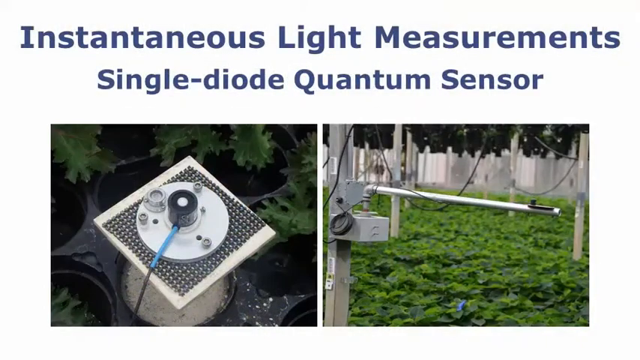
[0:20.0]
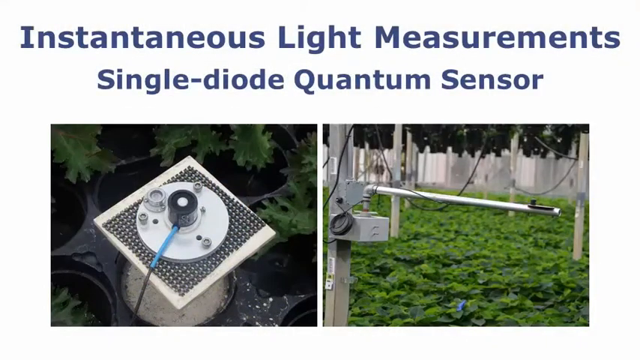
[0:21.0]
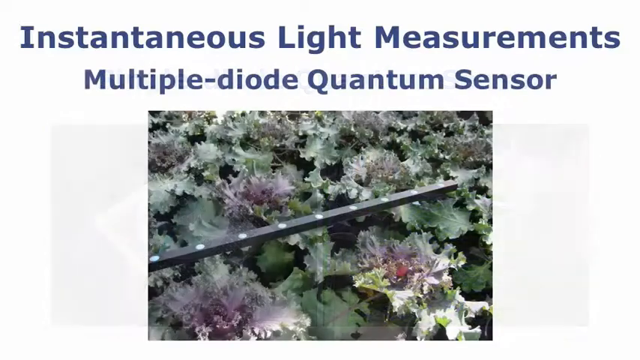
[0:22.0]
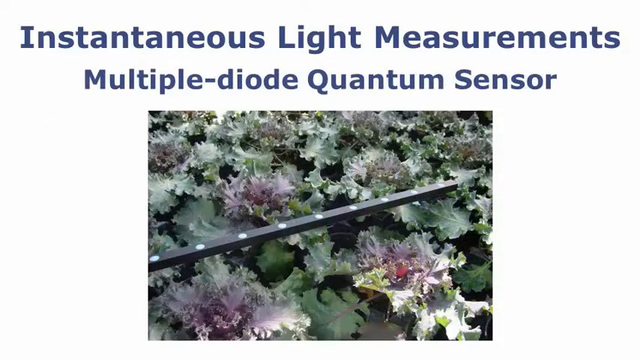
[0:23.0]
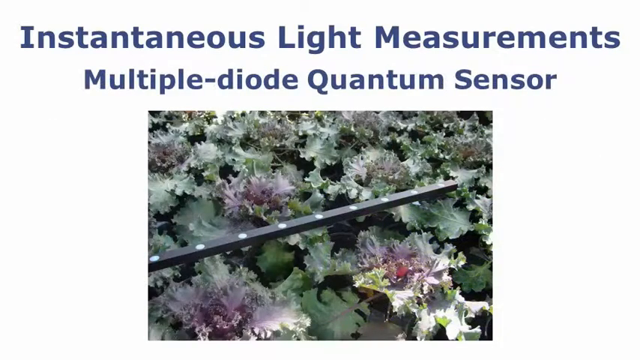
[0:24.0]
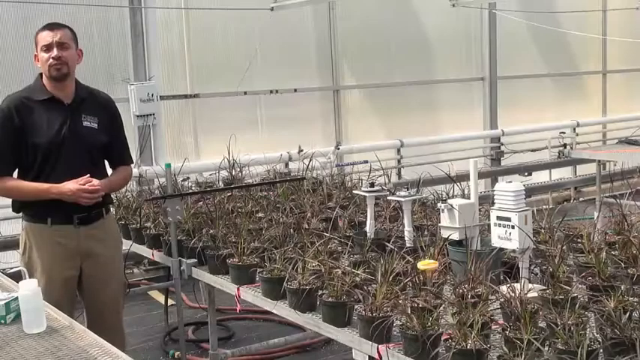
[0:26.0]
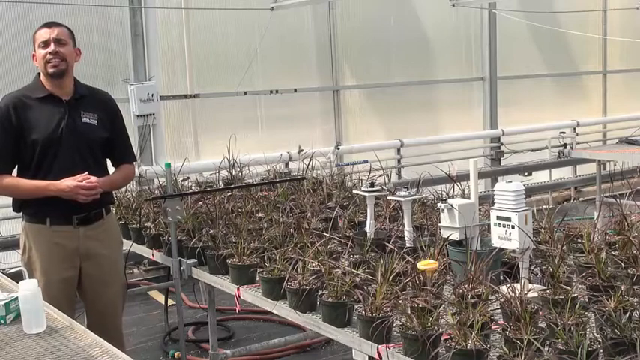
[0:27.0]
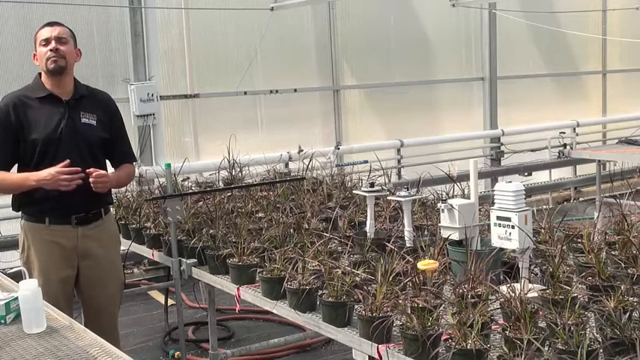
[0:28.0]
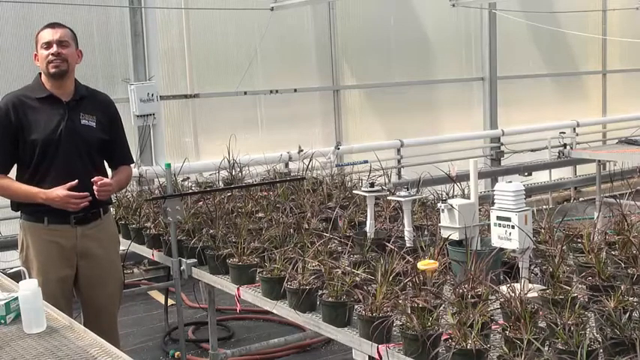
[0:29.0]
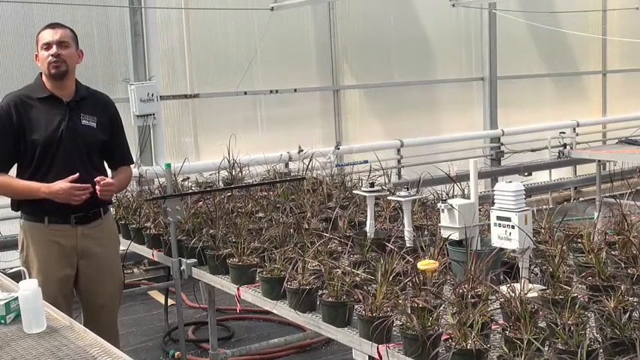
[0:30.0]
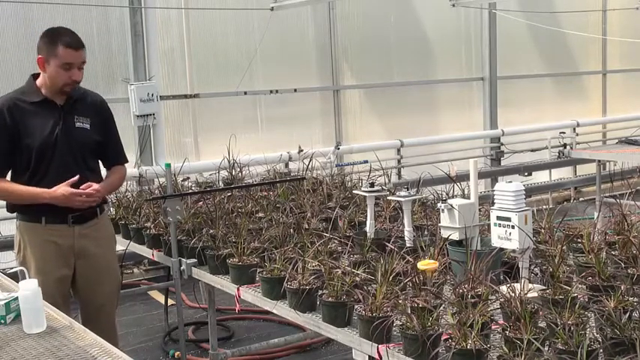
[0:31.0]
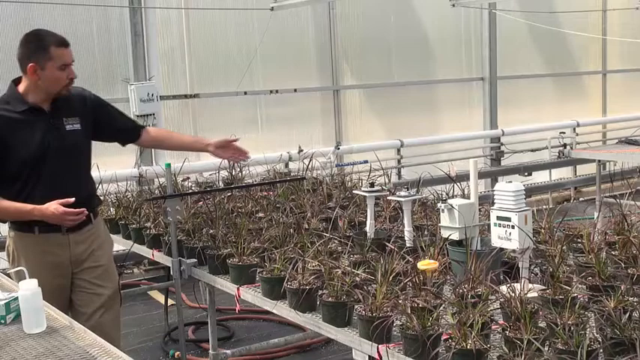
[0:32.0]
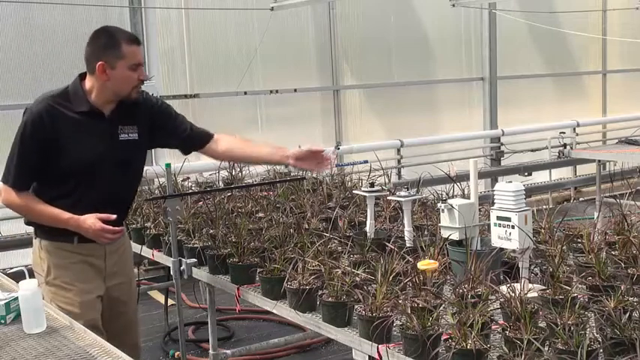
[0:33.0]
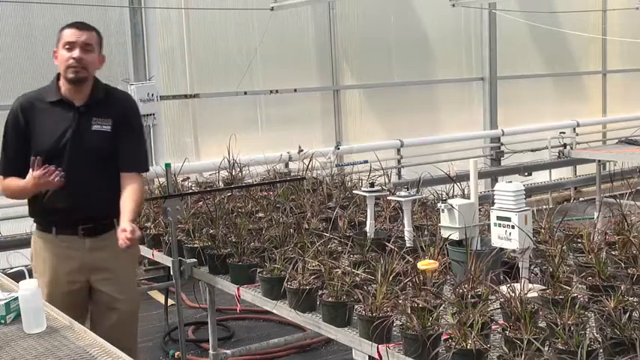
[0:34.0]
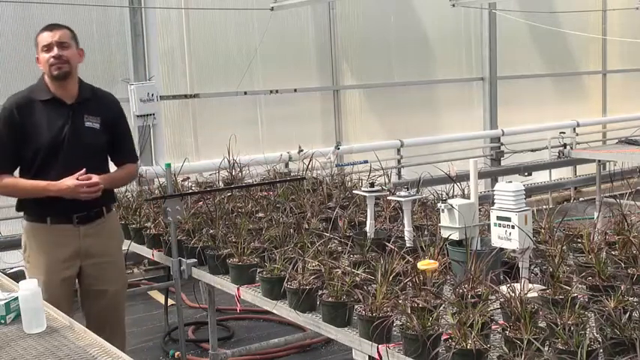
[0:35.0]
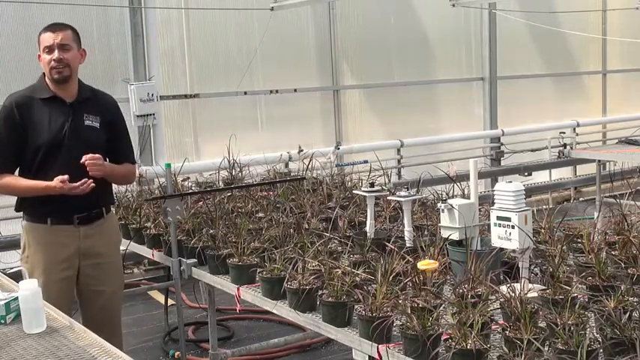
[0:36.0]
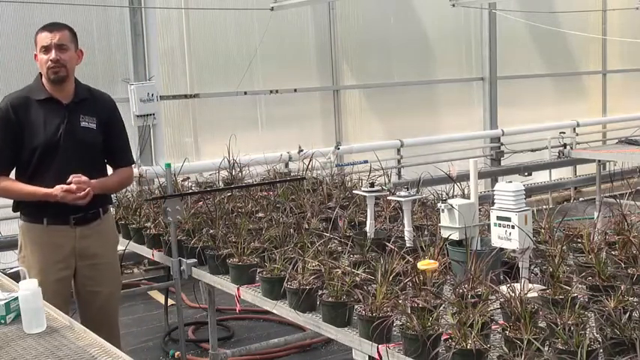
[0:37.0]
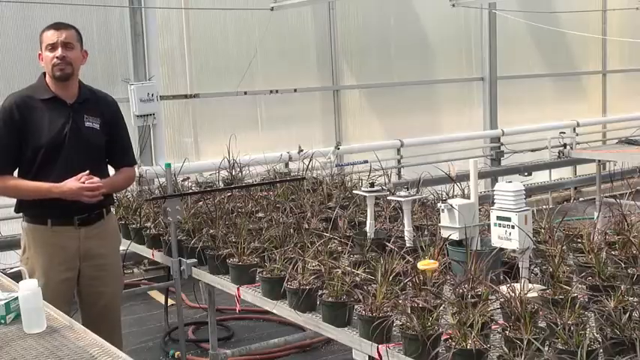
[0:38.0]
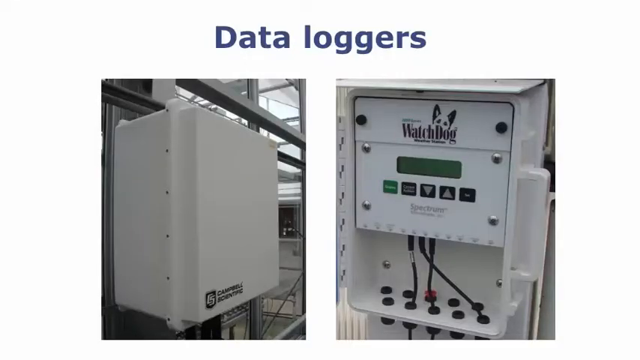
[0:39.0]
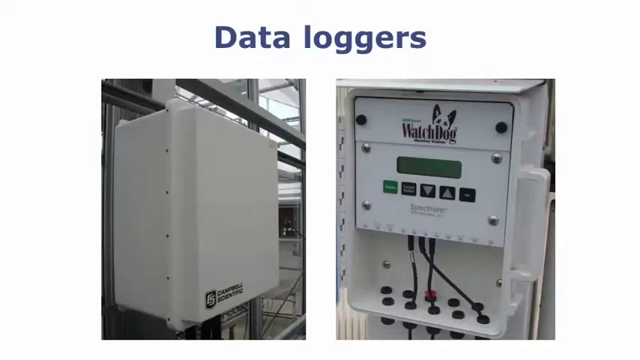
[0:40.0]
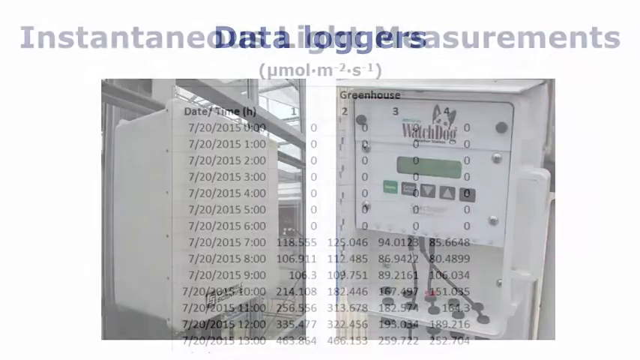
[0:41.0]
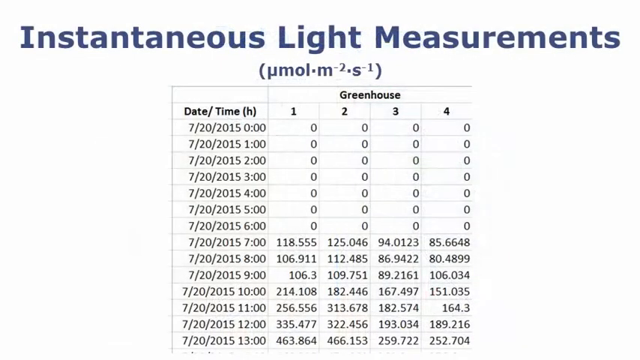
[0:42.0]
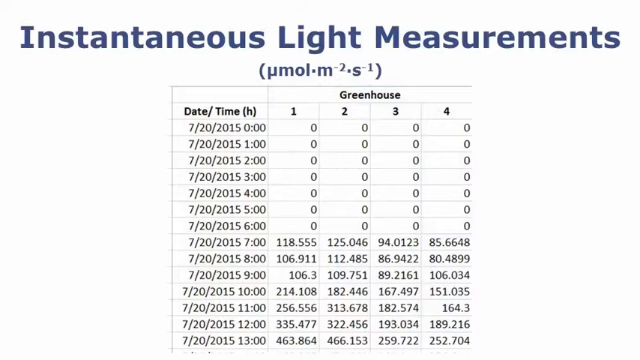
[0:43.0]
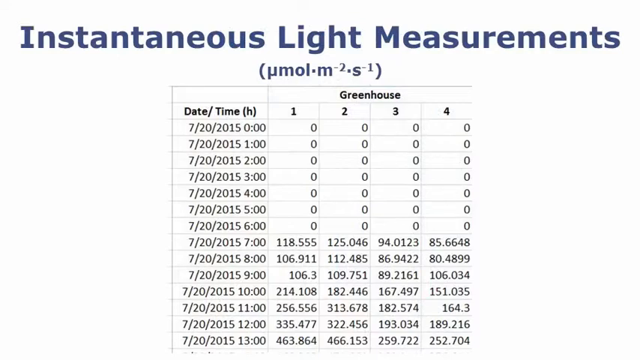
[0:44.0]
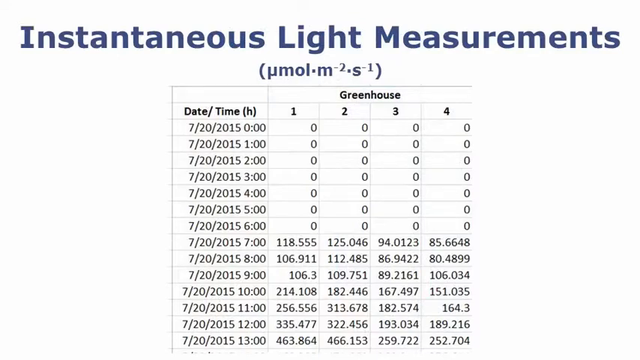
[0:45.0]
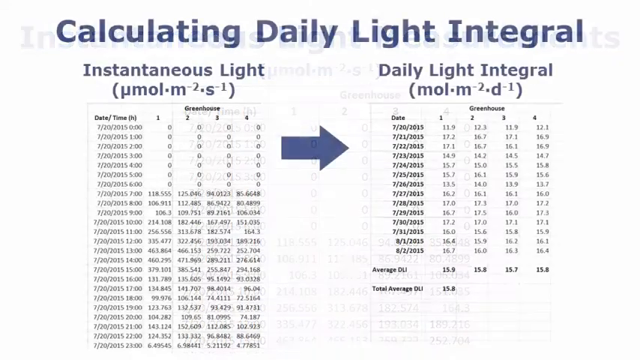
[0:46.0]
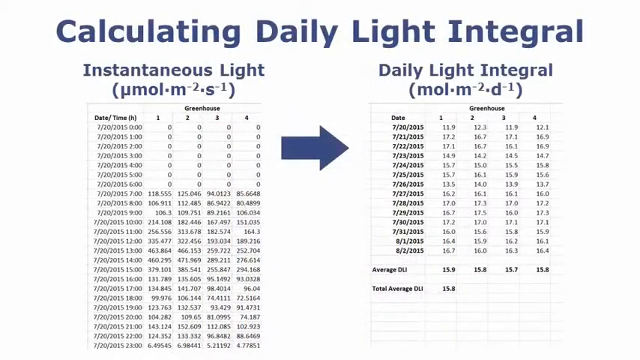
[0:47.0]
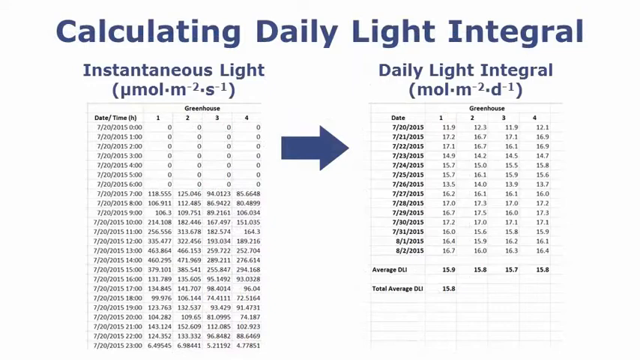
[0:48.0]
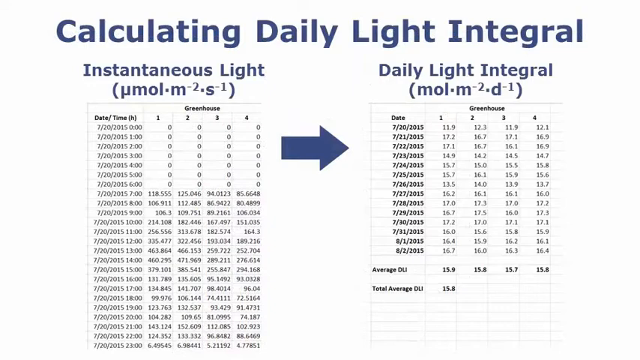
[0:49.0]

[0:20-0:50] The screen reads "instantaneous light measurements," with "single-diode" and "quantum sensor" underneath. Two images are shown. One is a small black square on top of a silver round disk, with a black and blue cord coming out toward the left side; the other looks like a pole sticking out of another pole. Next, a black pole with white circles on it appears with plant-like bushes. The view returns to the man in a black short-sleeved polo shirt with a collar; there are words on his shirt on his left side that cannot be read. He wears a brown belt and beige pants. He raises his left hand, which appears closed in a fist with the thumb up, then opens it and points toward what look like white pipes between plants in black pots. The scene then changes to text reading "data loggers" and "instantaneous light measurements."